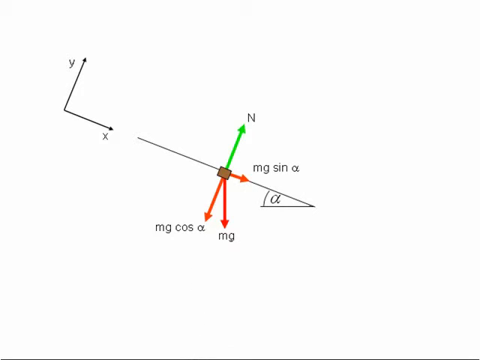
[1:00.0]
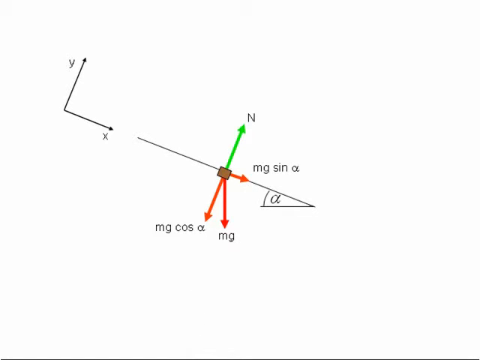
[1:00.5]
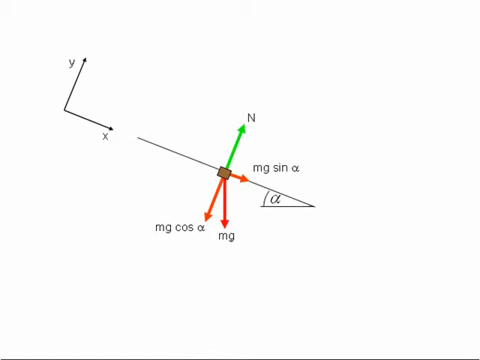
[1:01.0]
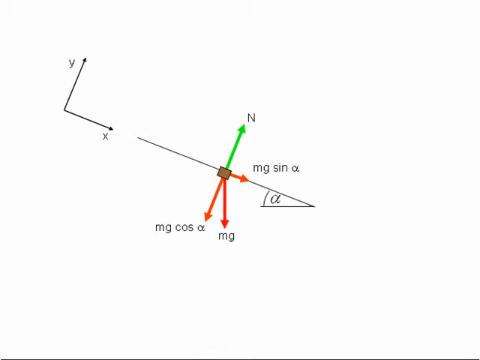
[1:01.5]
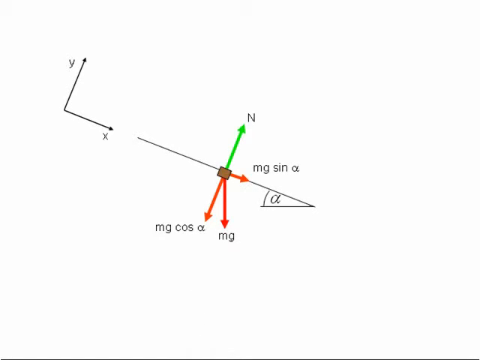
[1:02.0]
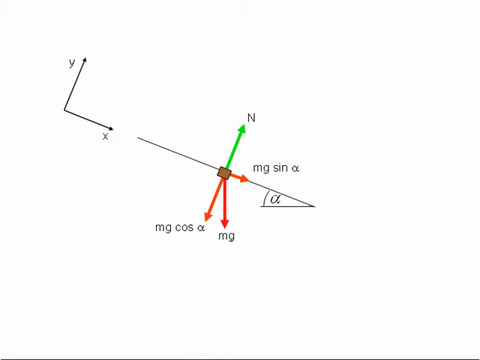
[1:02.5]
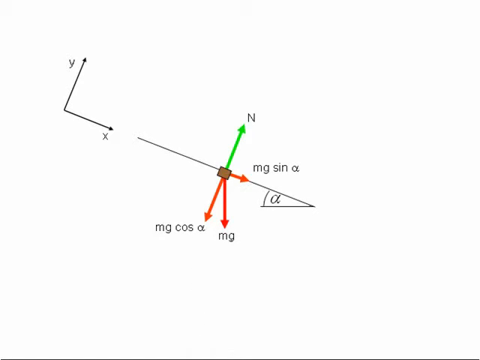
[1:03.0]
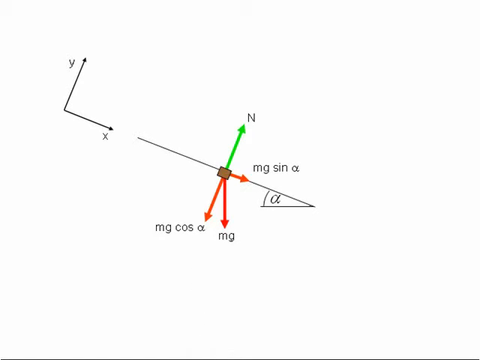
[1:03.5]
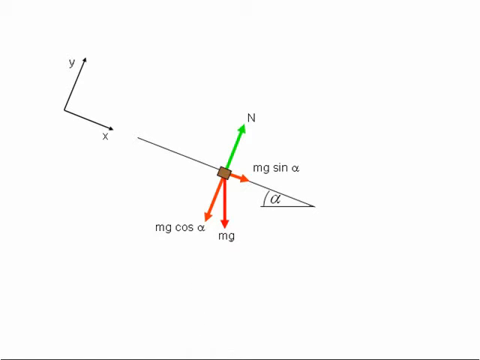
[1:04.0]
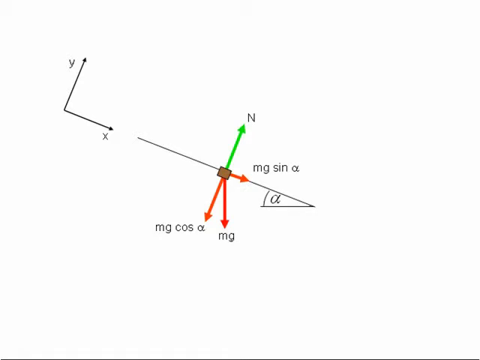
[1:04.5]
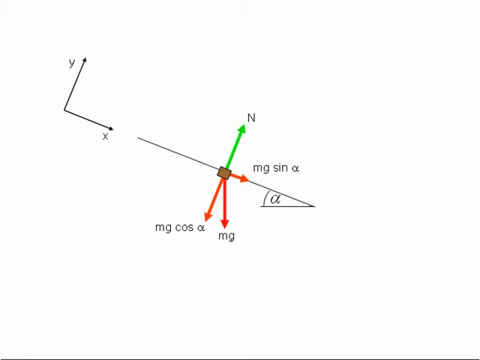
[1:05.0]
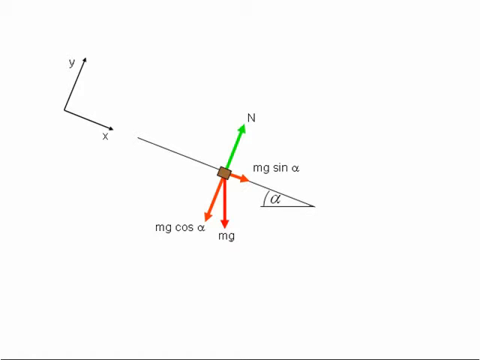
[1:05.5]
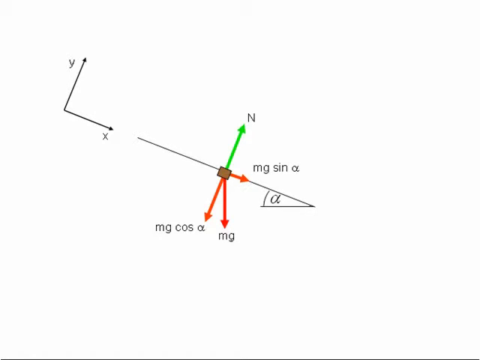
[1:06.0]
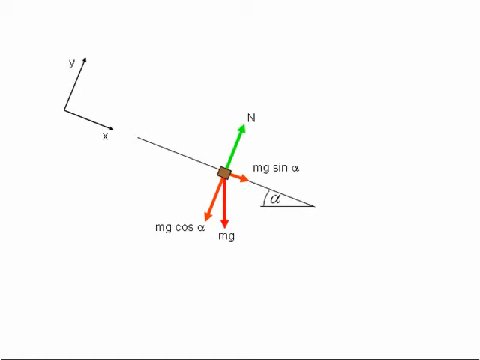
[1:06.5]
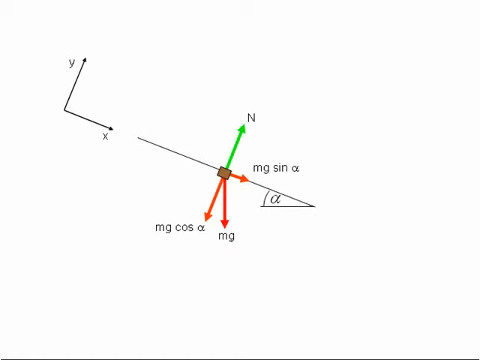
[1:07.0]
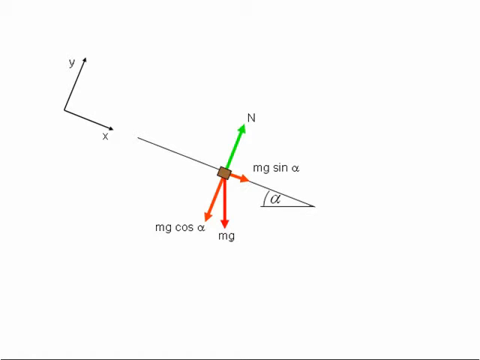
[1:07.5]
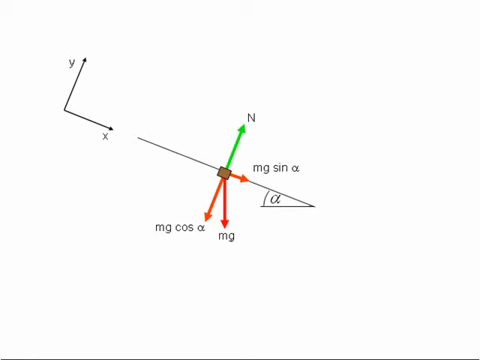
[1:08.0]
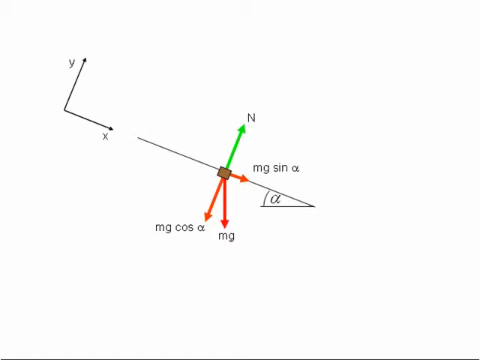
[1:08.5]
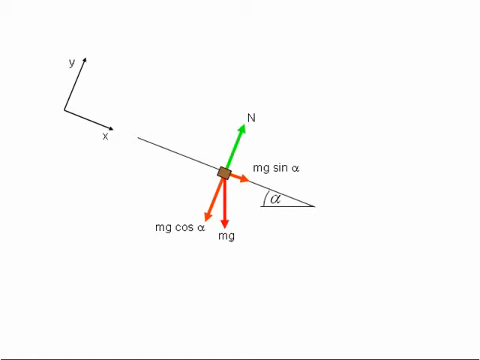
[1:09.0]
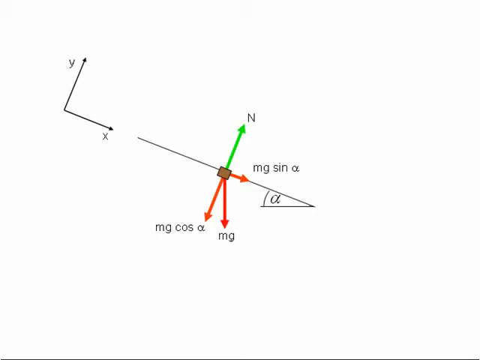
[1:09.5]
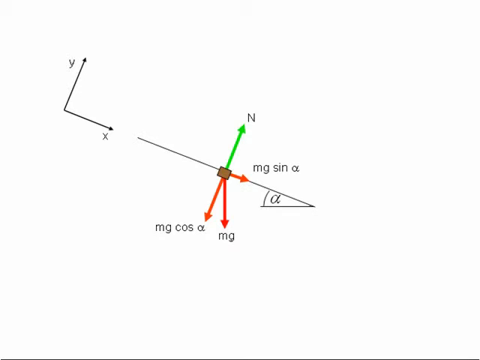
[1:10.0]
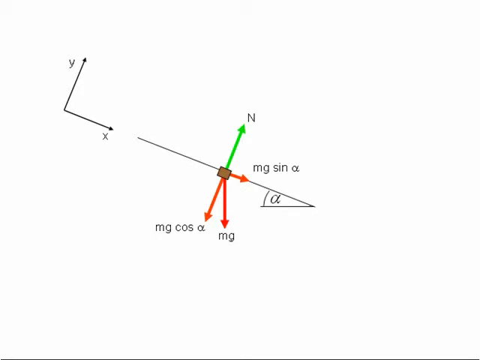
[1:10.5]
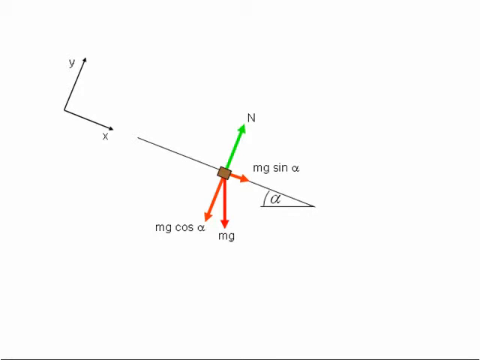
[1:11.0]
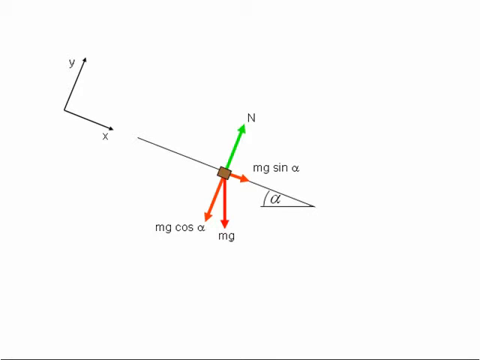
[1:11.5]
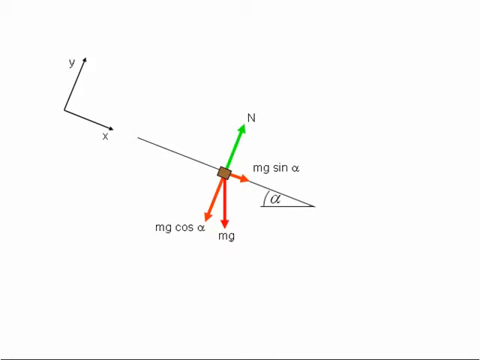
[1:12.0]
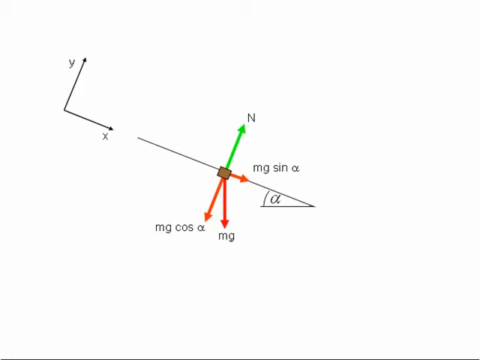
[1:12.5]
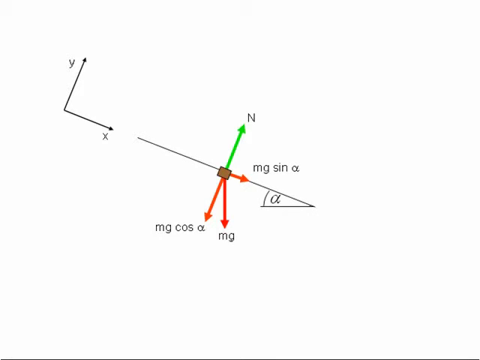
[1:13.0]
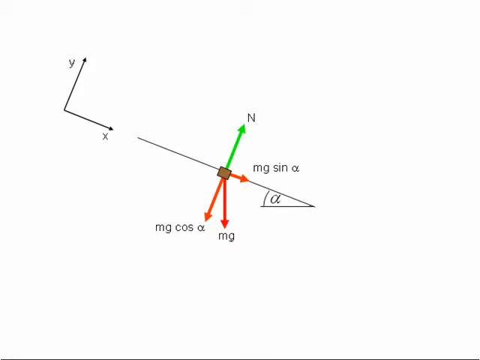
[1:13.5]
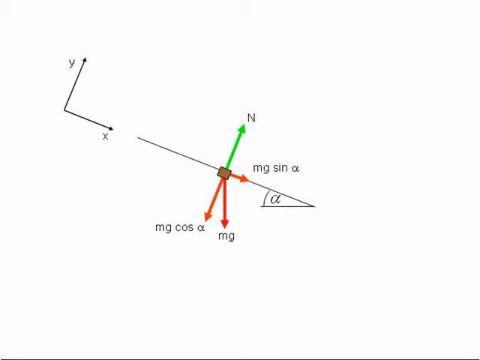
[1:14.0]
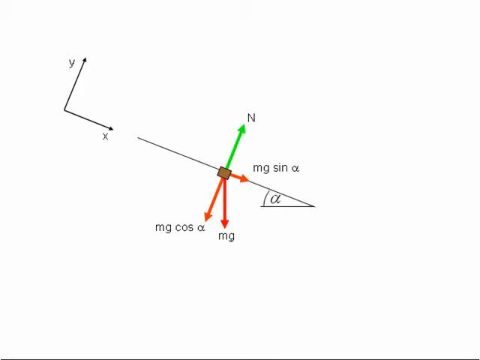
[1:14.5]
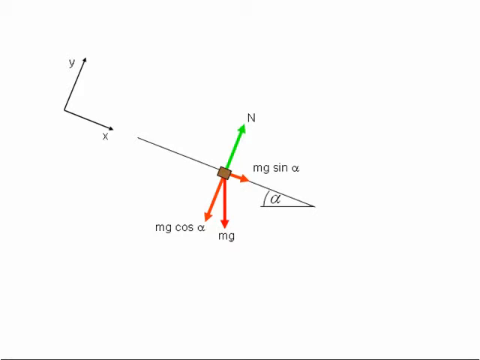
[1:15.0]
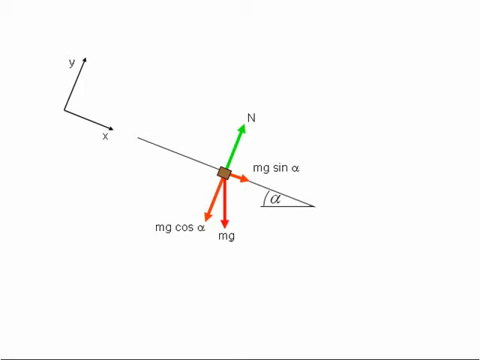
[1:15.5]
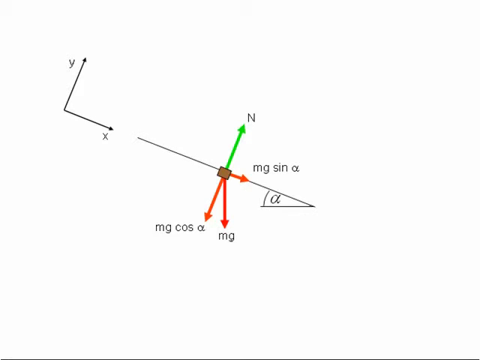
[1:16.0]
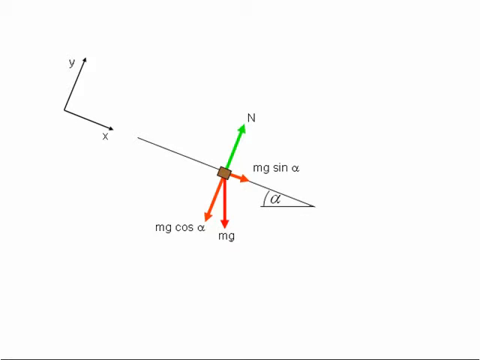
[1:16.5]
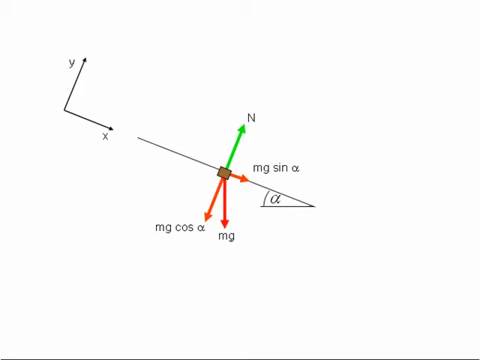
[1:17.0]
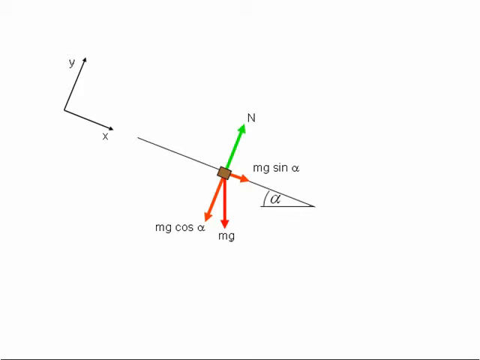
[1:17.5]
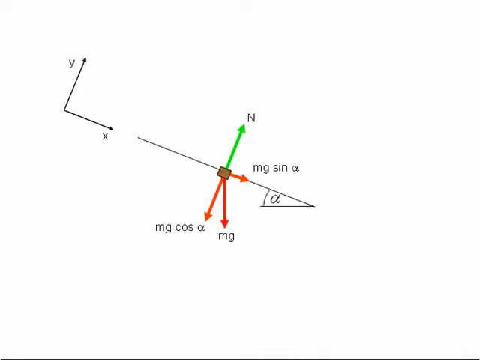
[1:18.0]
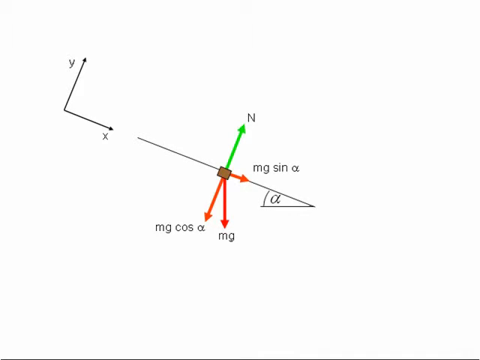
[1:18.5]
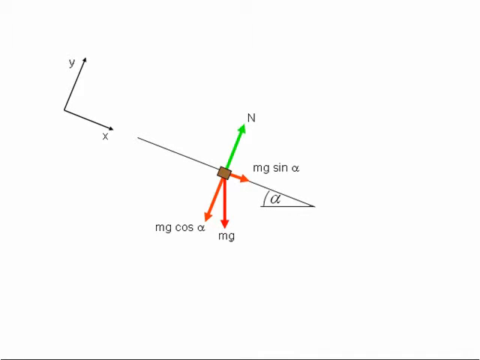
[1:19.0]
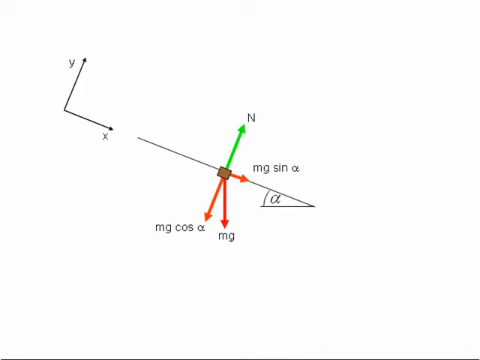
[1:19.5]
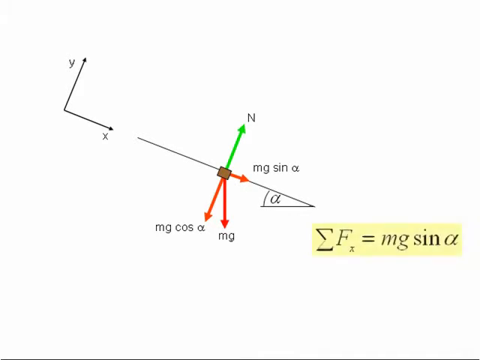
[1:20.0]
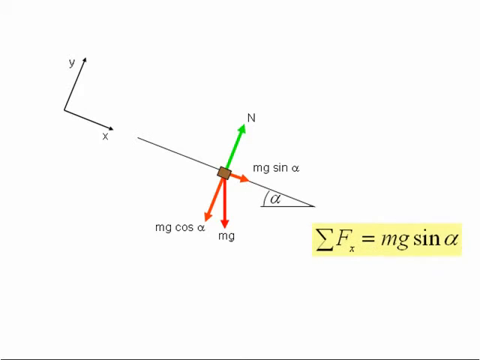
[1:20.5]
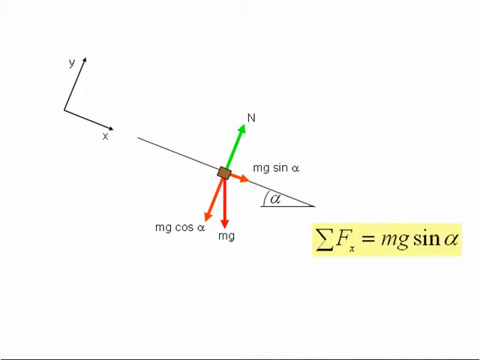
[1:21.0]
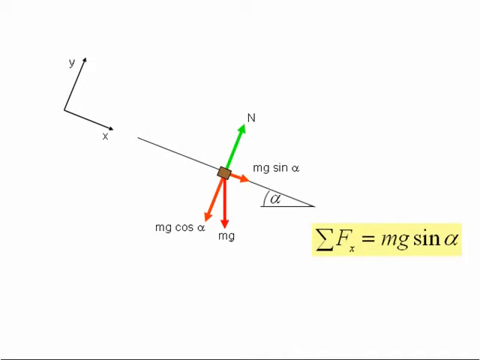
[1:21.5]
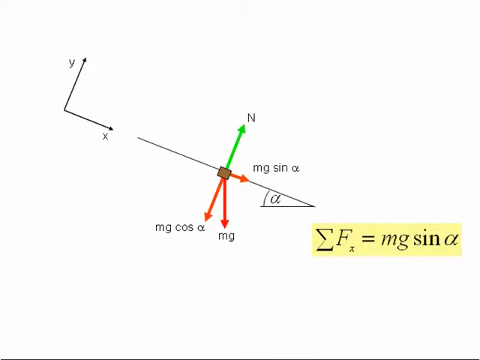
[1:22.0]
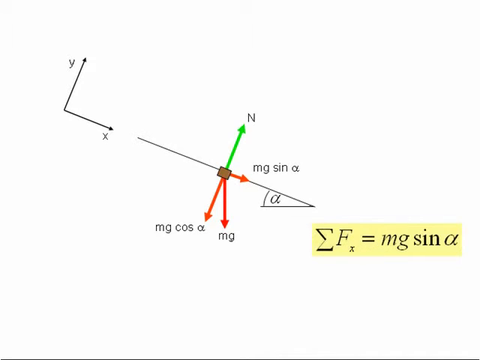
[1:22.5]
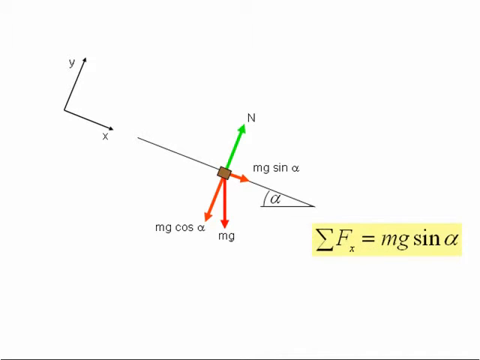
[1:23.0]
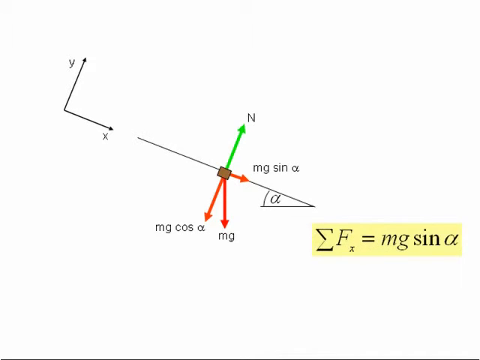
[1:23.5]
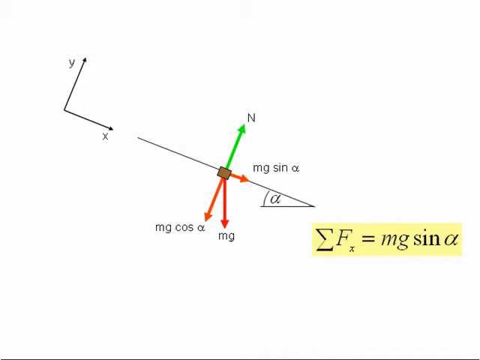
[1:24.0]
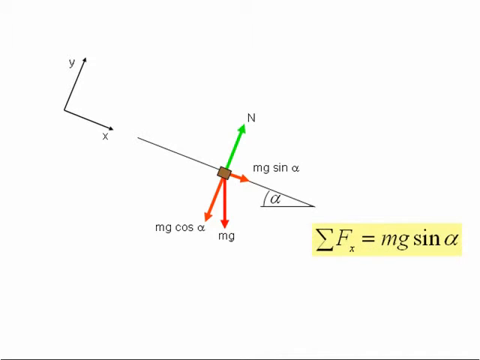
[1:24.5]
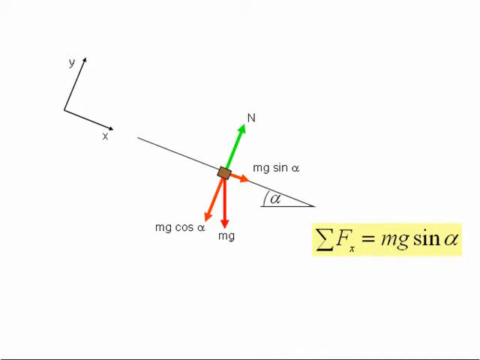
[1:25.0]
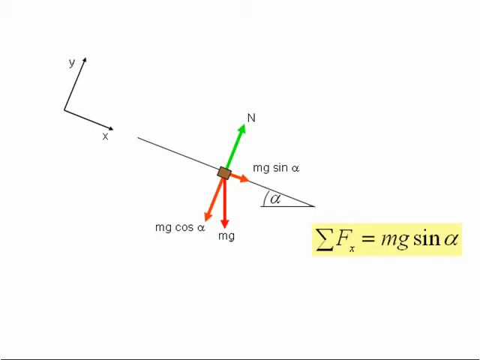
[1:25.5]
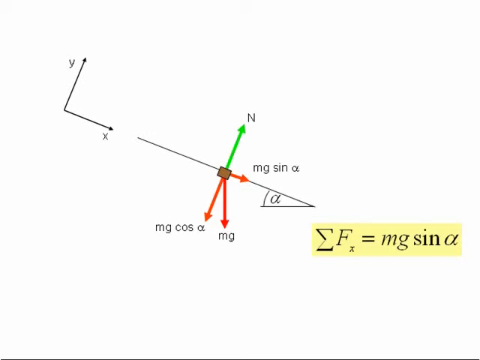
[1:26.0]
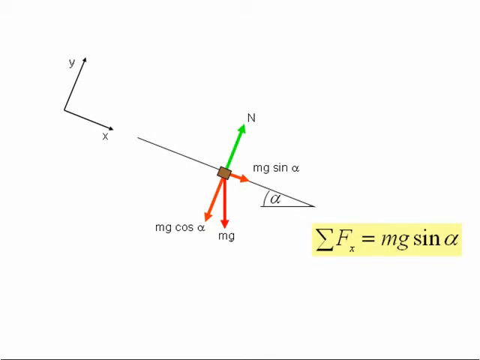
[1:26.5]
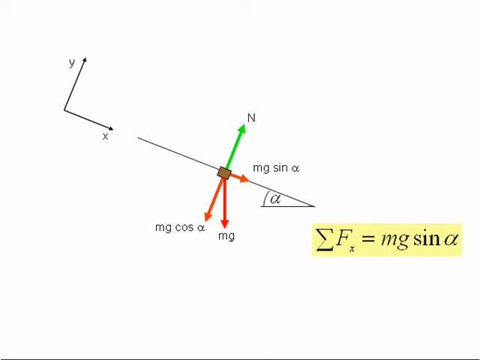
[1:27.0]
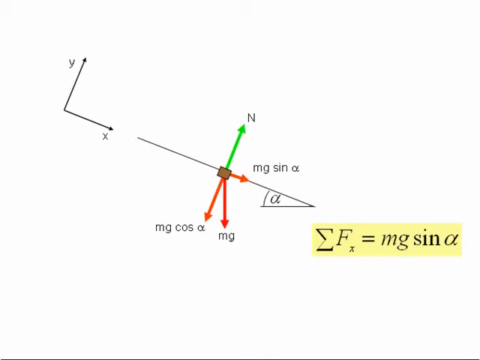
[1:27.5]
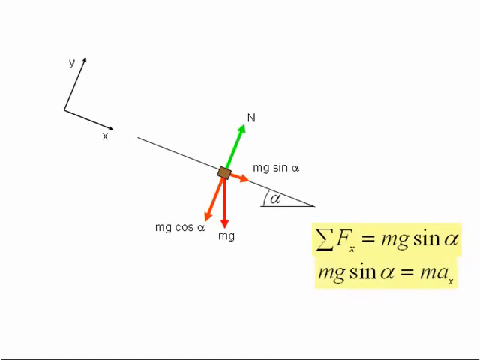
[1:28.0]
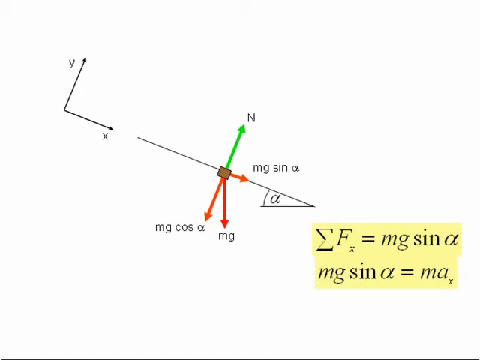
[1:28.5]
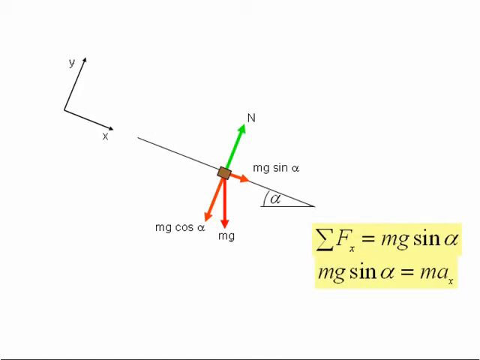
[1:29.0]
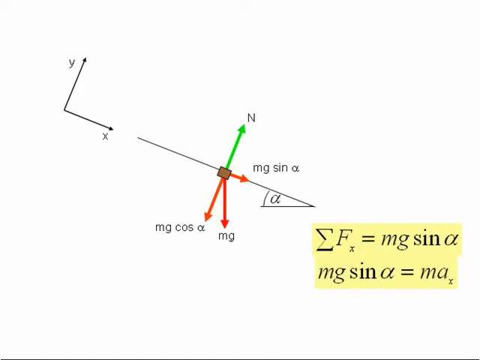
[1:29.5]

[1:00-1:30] On a white background, the same picture shows a coordinate system on the left with Y pointing north and X pointing east. Near the X line is the main line of the problem with a wooden brick in its center. Four lines extend from the brick: a green line pointing north, called N; a line going east of the brick along the X line, called mg sin alpha, with the alpha angle near it measured from the green line; and the last, a red line, mg cos alpha. Formulas then appear: sum of Fx is equal to mg sin alpha, and mg sin alpha is equal to max.